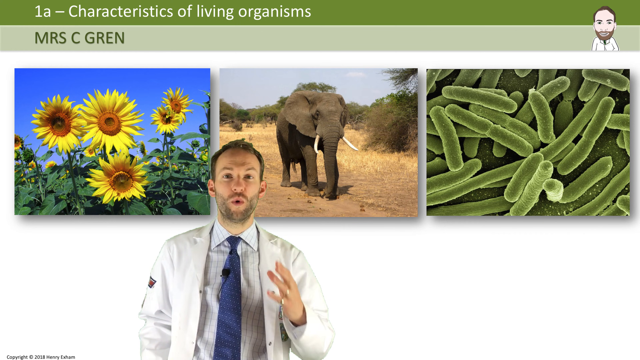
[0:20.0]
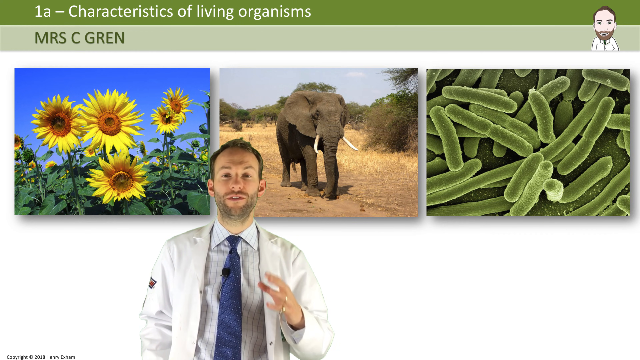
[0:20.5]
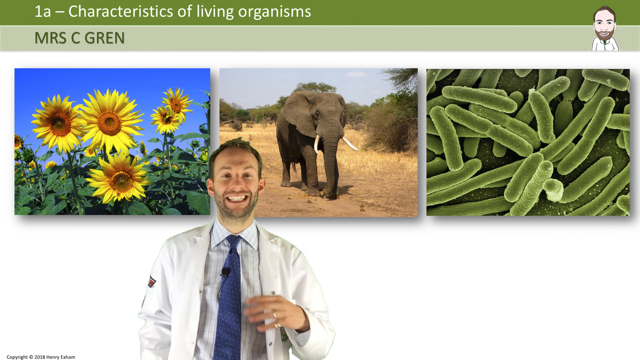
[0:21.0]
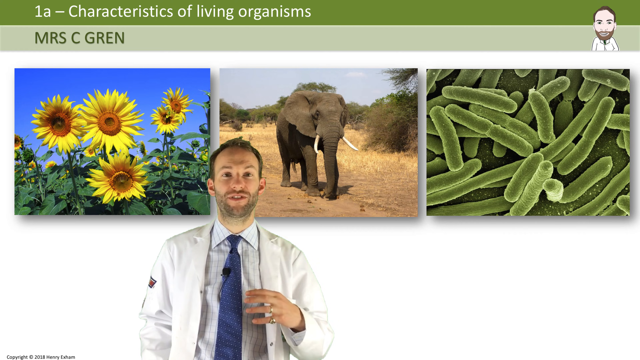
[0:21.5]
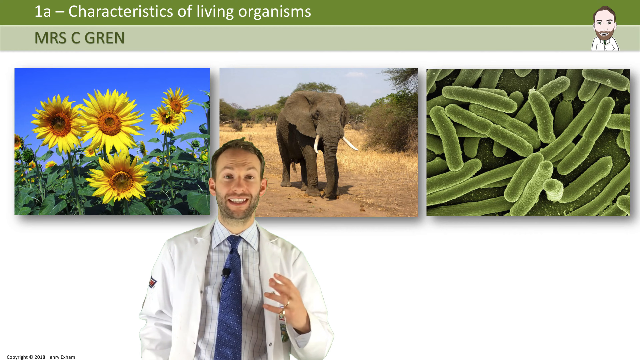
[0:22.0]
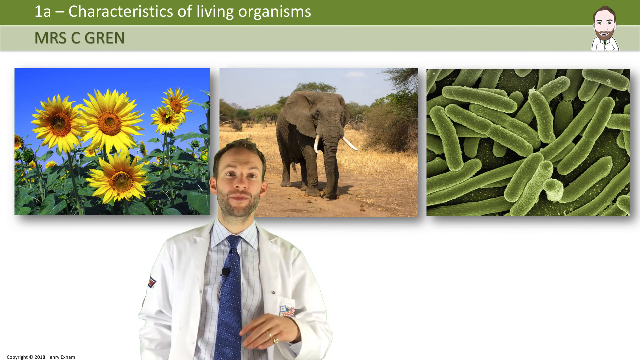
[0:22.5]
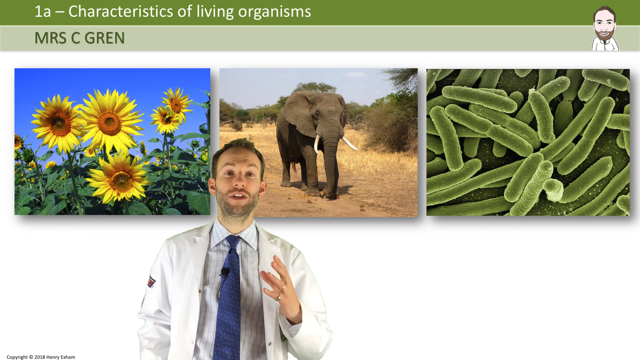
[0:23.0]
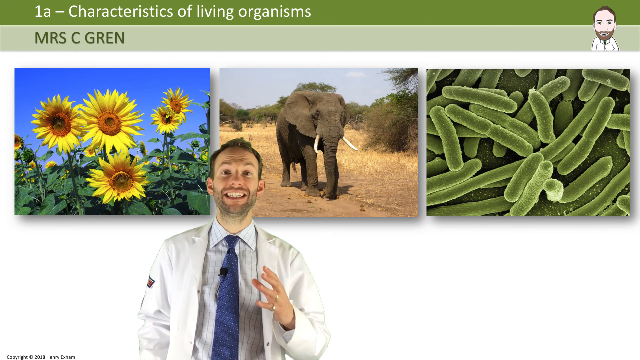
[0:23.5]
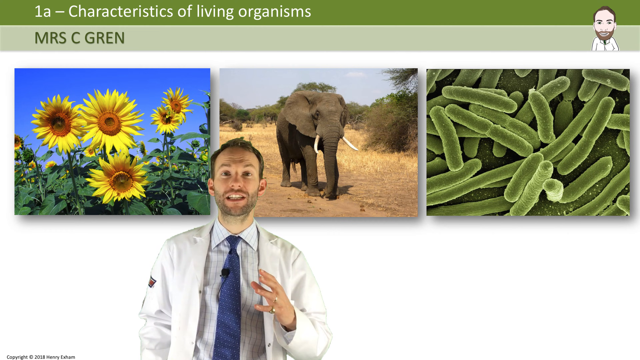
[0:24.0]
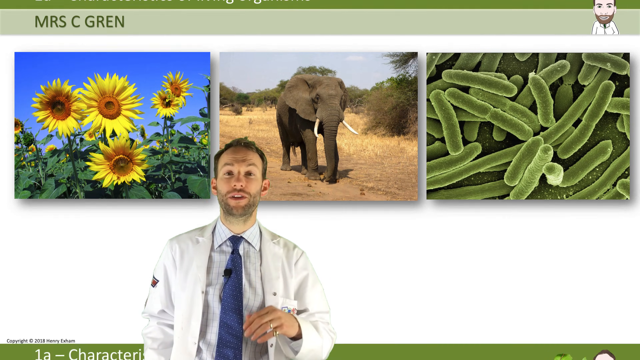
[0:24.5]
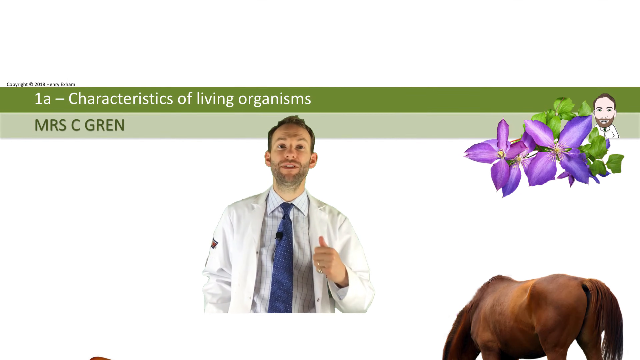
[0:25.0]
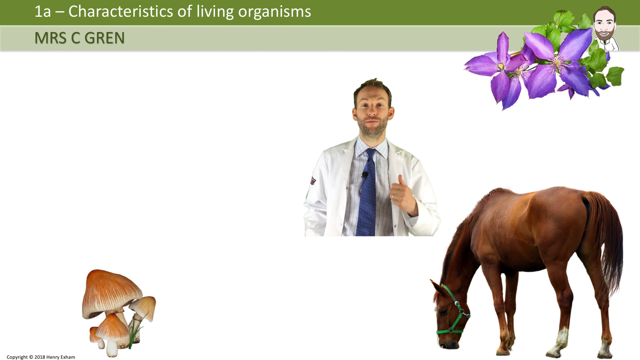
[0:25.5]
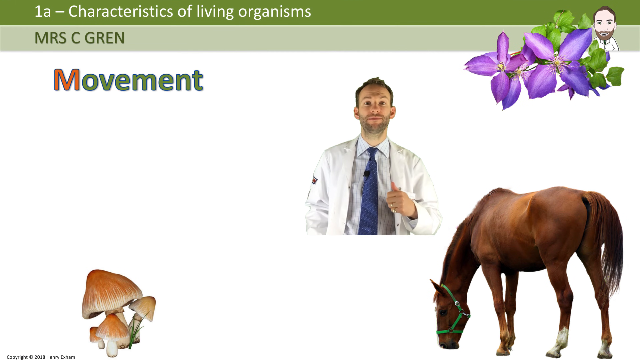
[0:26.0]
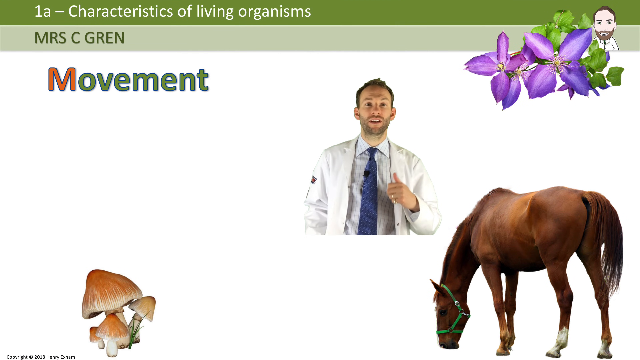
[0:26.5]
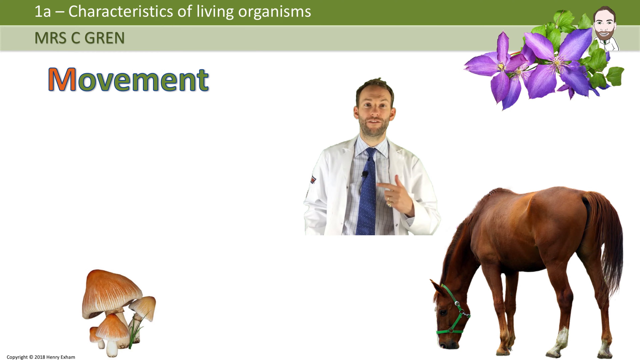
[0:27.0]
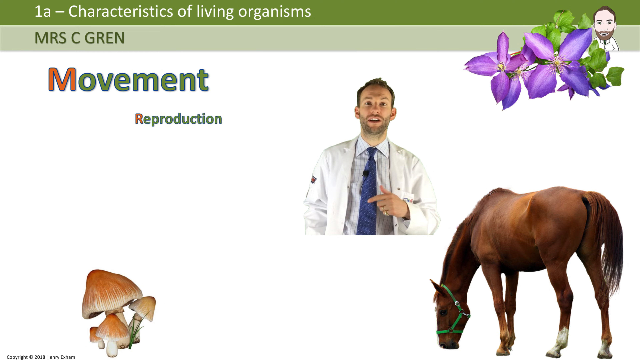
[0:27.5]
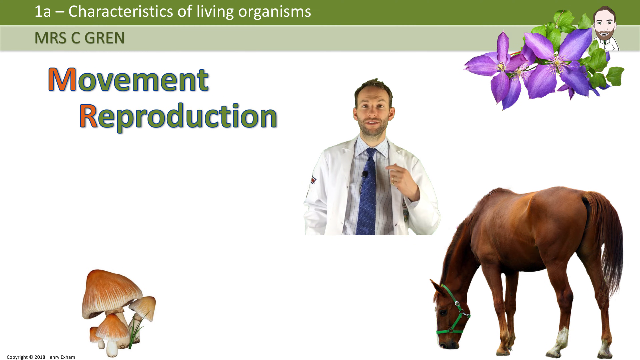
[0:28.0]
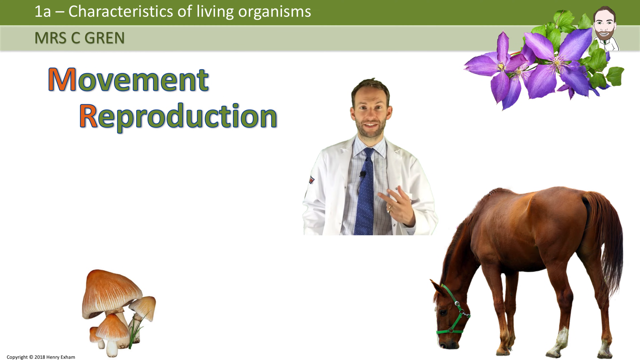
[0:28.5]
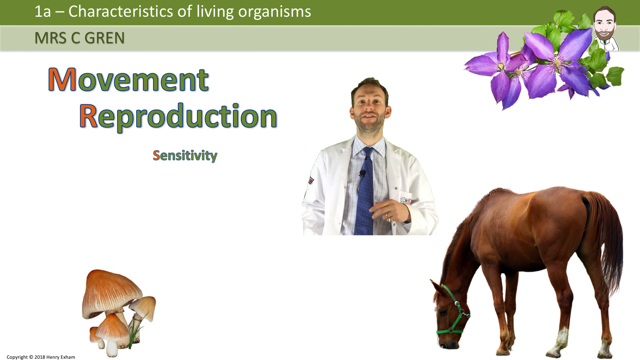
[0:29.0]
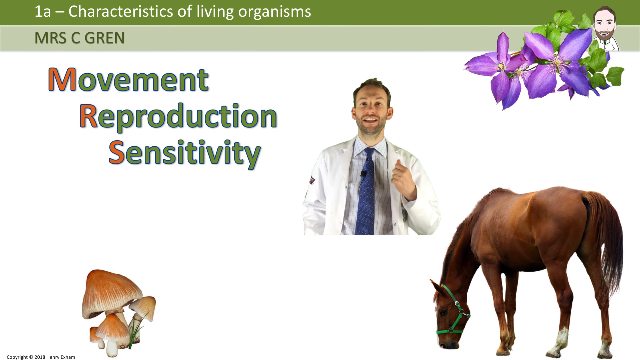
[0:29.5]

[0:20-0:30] The man in the center of the screen, wearing a white lab coat and a blue tie, continues to talk, moving his hand and head. The three images of the sunflowers, elephant and bacteria are still behind him. The scene transitions: a horse is in the bottom right, mushrooms are in the bottom left, and purple flowers are in the top right, with the cartoon of the scientist behind them. The scientist shifts slightly to the right, and on the left the words "movement", "reproduction" and "sensitivity" are shown.